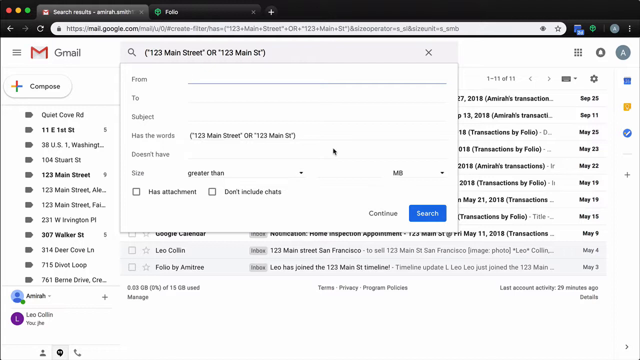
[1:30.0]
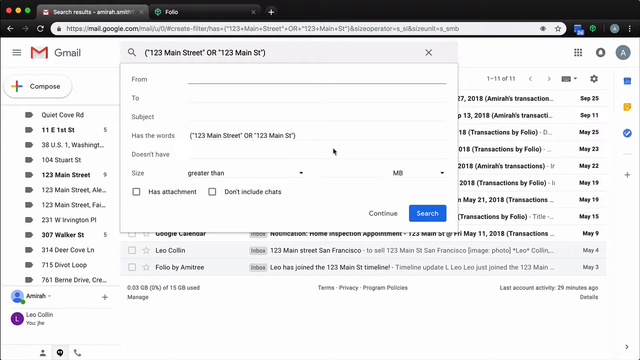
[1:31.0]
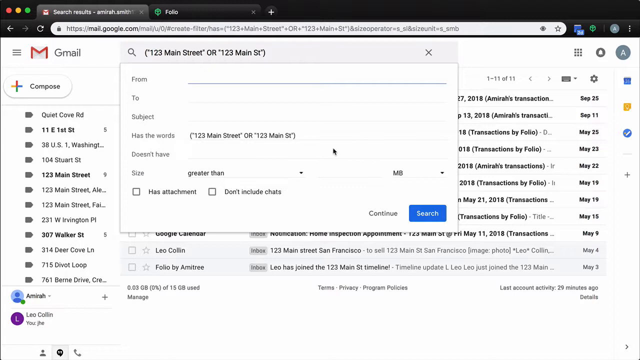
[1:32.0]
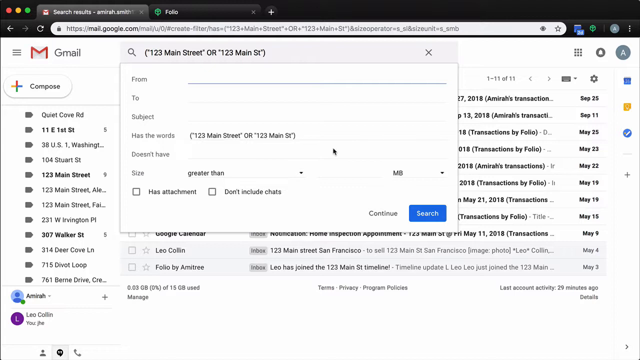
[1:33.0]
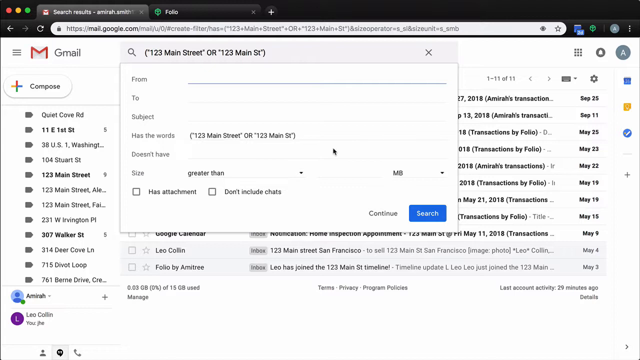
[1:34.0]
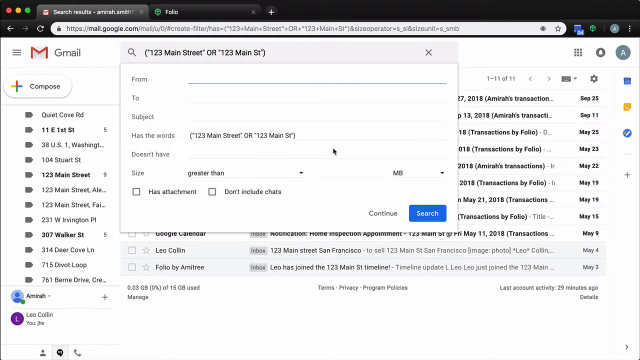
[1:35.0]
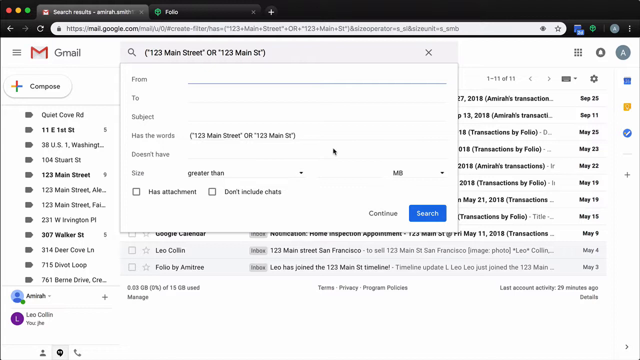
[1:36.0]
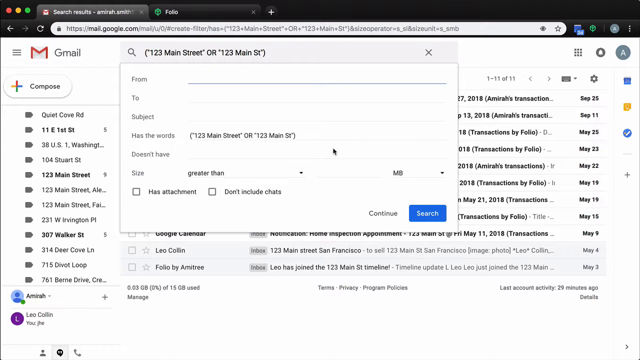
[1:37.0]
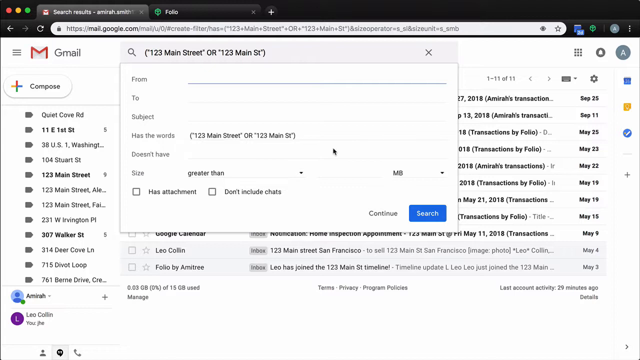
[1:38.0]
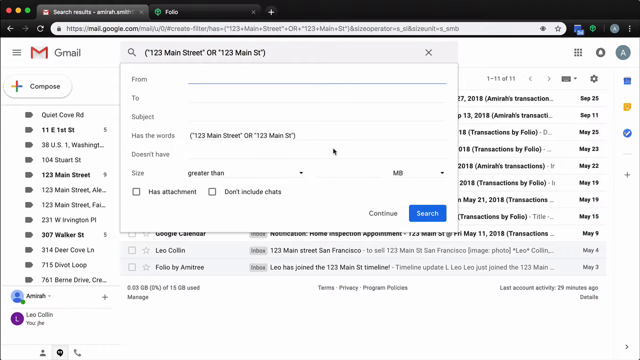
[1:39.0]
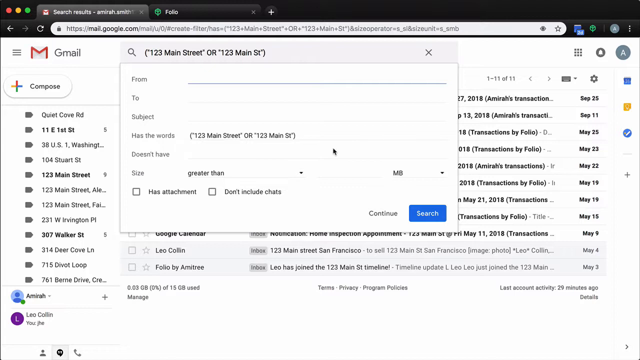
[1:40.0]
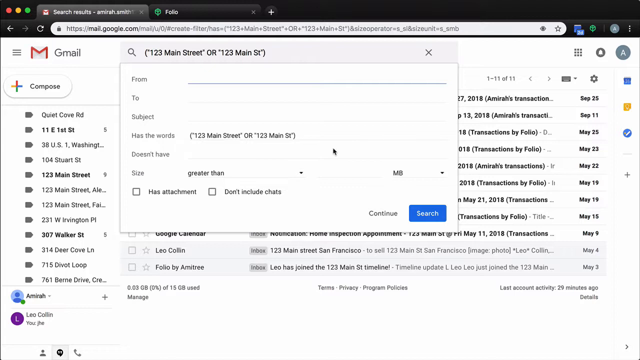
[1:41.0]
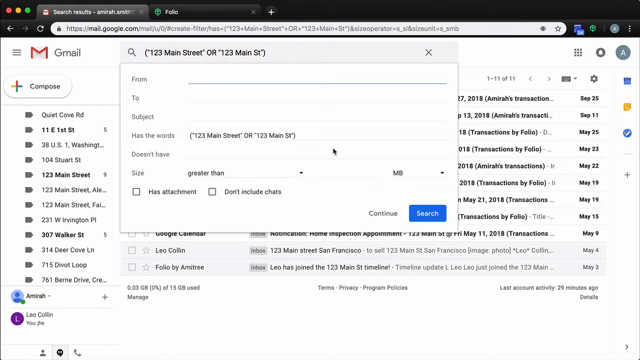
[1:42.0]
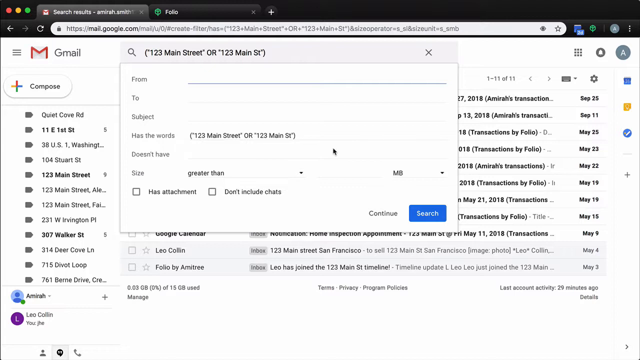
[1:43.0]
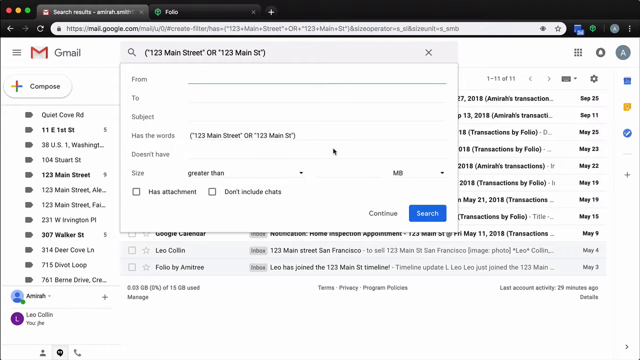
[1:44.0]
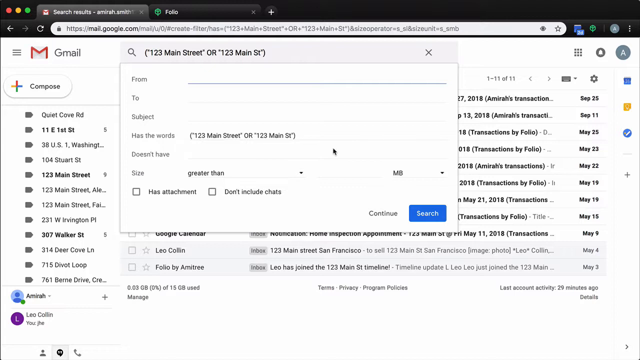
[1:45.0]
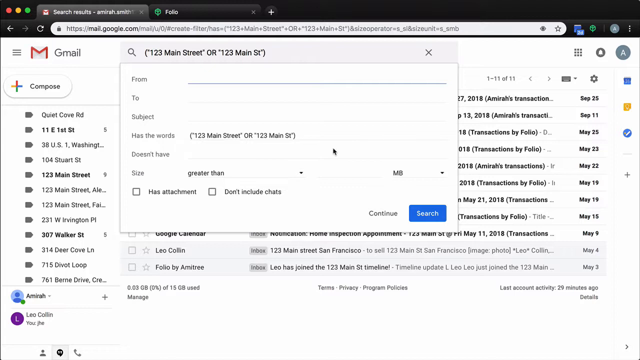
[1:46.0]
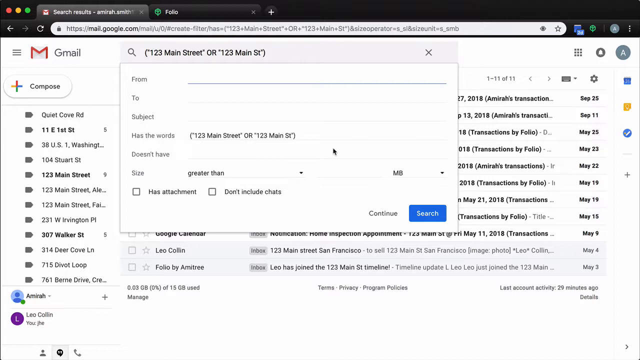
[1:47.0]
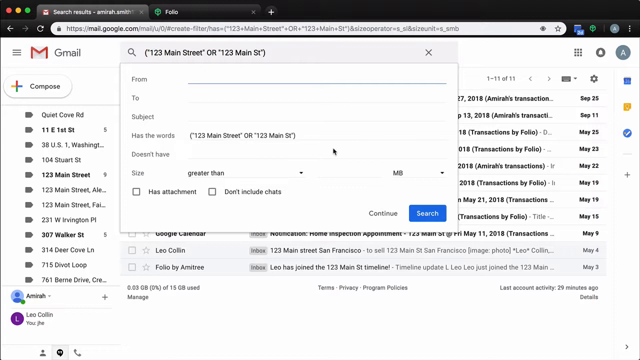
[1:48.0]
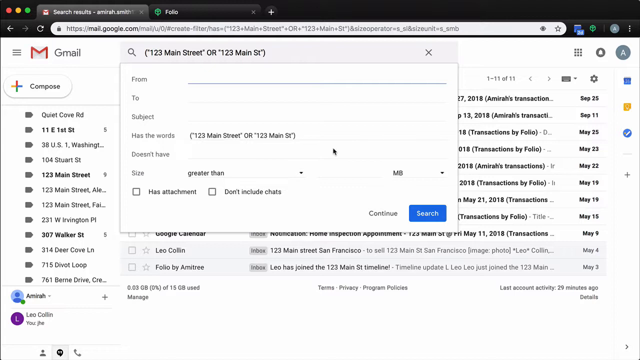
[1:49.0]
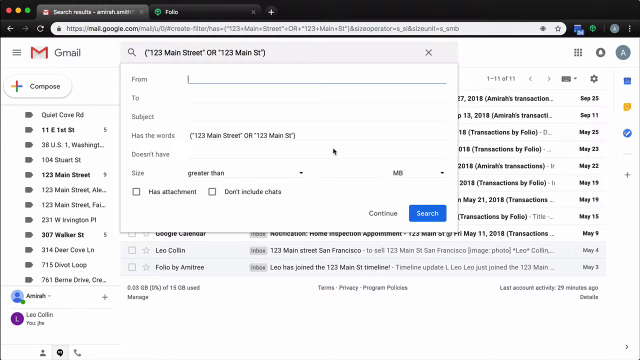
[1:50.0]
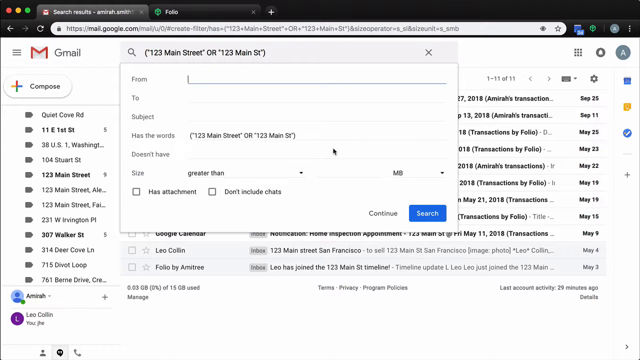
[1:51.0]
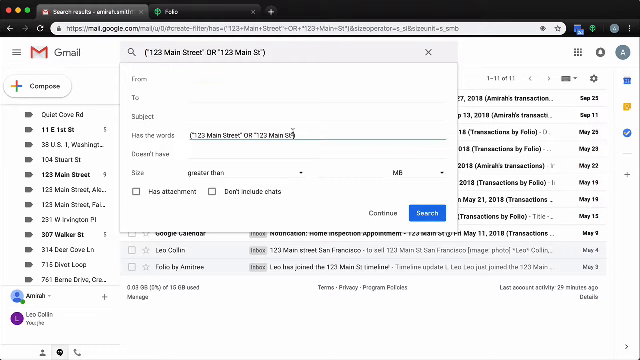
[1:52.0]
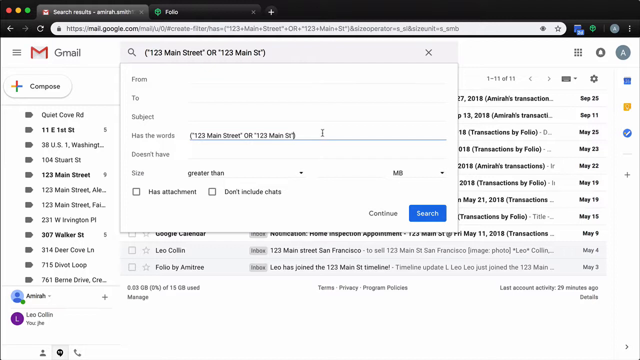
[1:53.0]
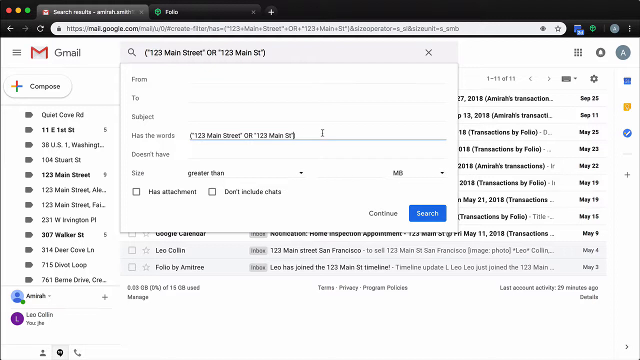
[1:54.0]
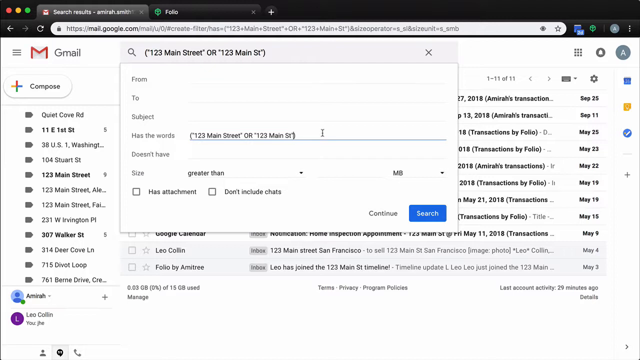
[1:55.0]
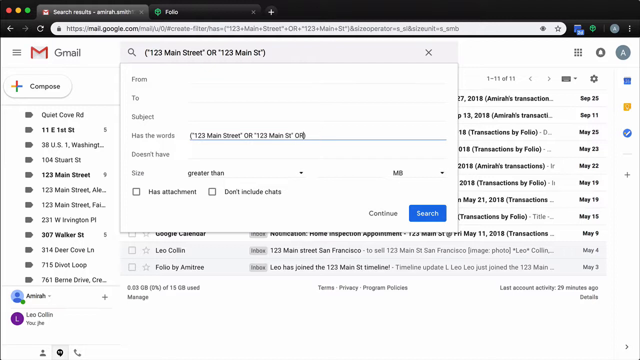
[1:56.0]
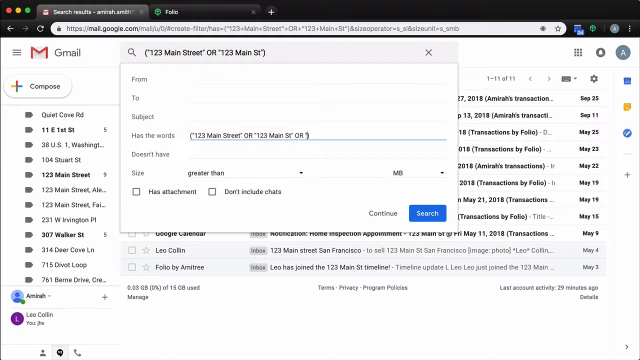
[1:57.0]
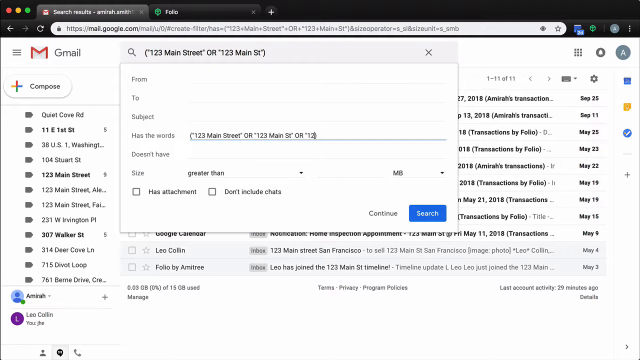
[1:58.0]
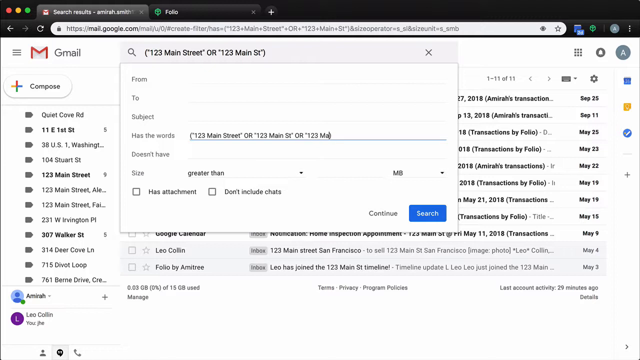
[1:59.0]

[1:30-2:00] The edit pop-up for the filter shows the search keywords "123 Main Street or 123 Main St", a line to add the date from and another line to add the date to, a line for subject, a has the words option and a doesn't have option. The size can be set to greater than or smaller than, and on the right side a drop-down menu for units has Megabytes selected. At the bottom are two checkboxes, has attachment and don't include chat, neither of which is ticked. The user edits the has the words option and enters a different keyword that also includes 123 Main Street.